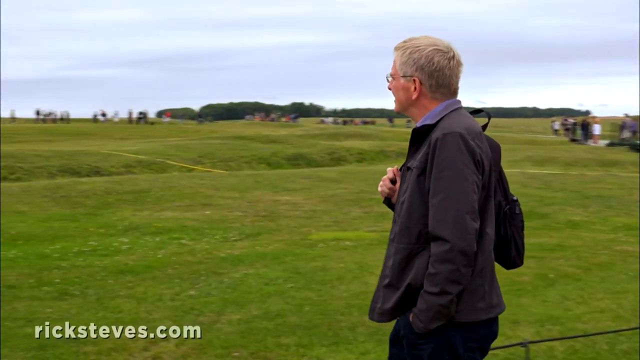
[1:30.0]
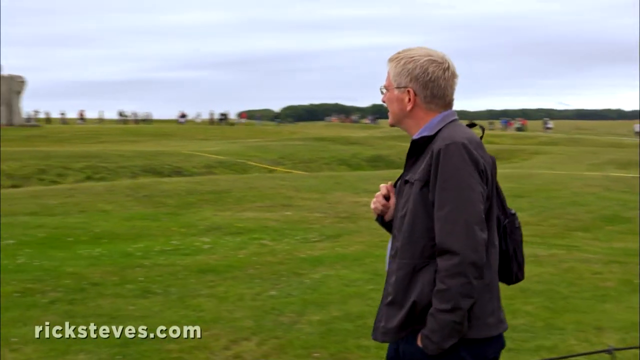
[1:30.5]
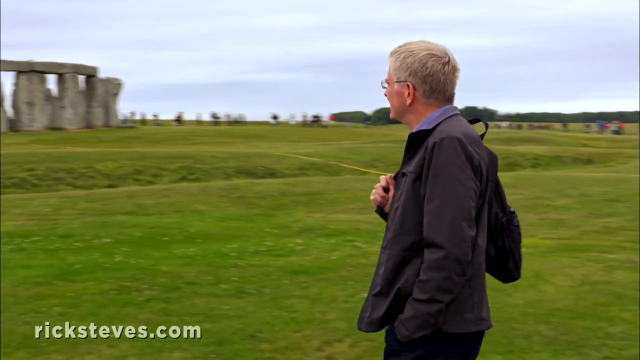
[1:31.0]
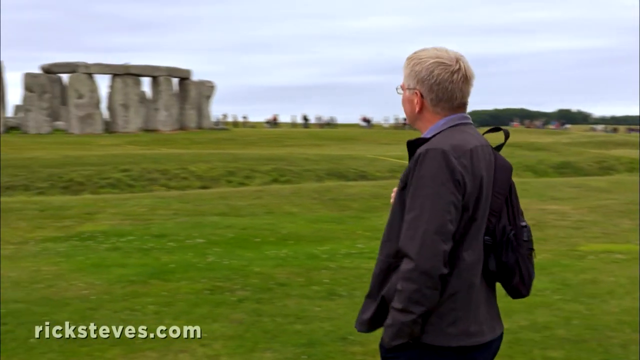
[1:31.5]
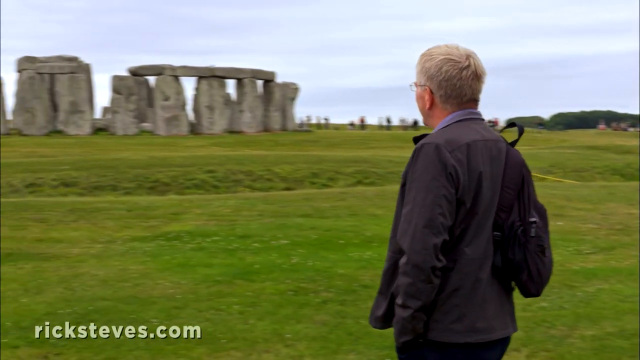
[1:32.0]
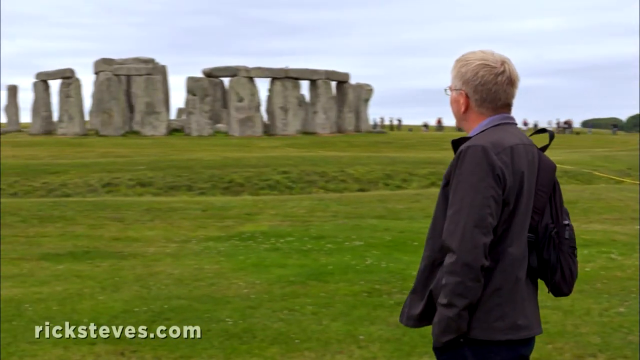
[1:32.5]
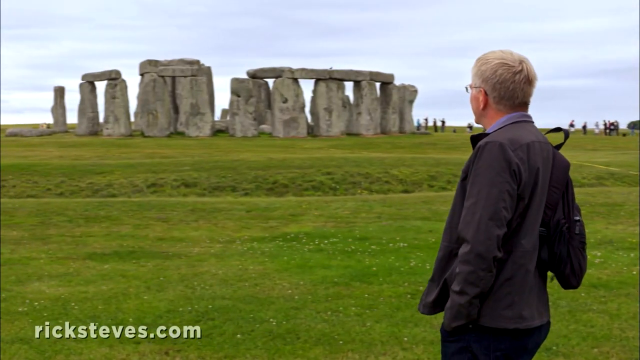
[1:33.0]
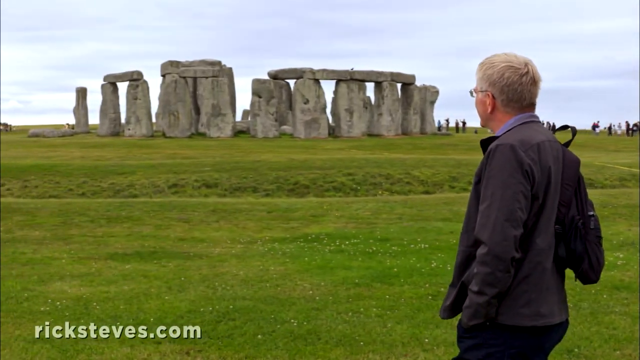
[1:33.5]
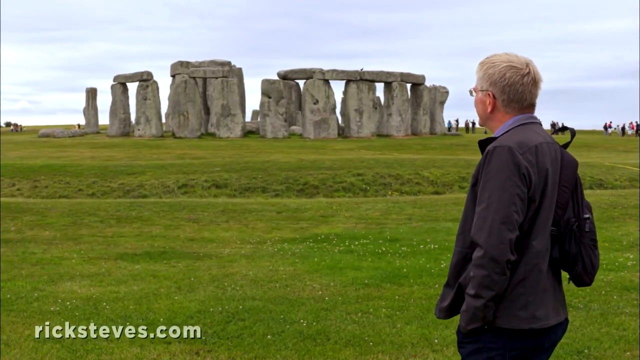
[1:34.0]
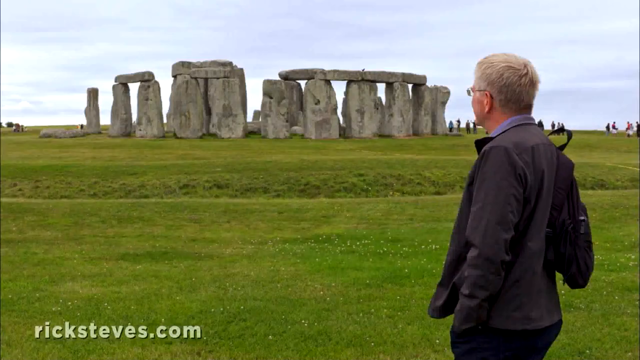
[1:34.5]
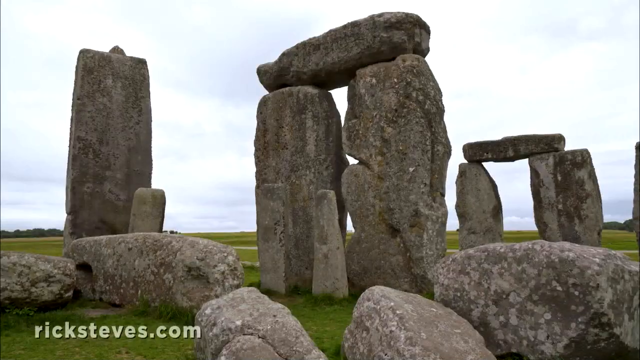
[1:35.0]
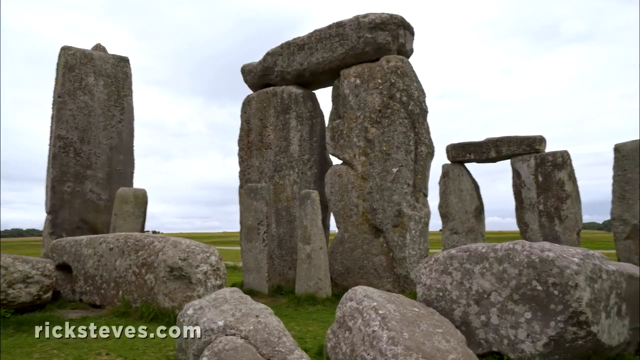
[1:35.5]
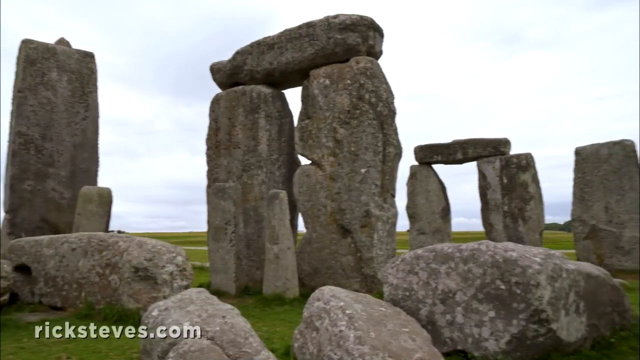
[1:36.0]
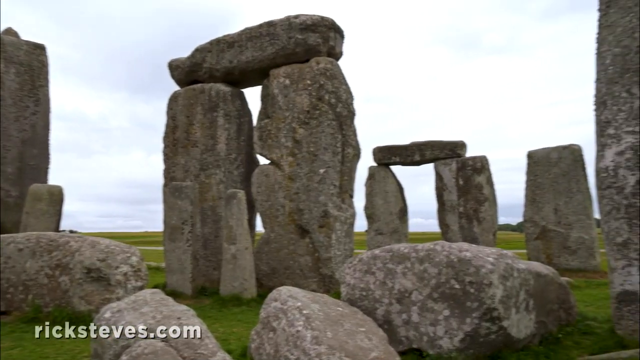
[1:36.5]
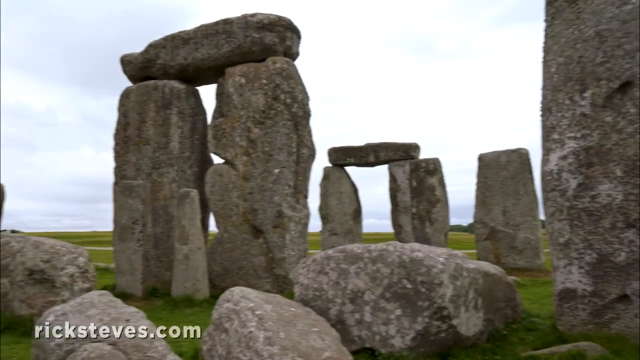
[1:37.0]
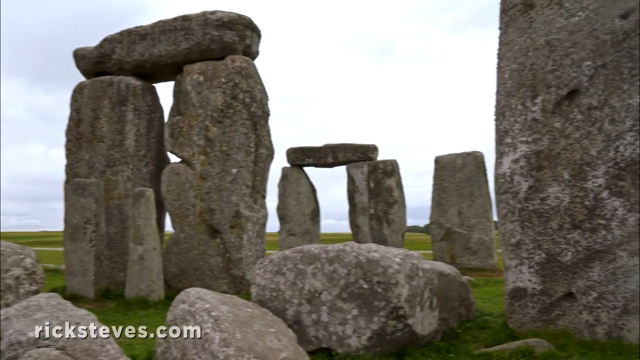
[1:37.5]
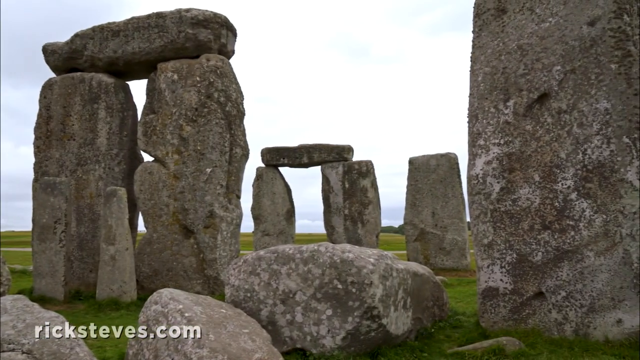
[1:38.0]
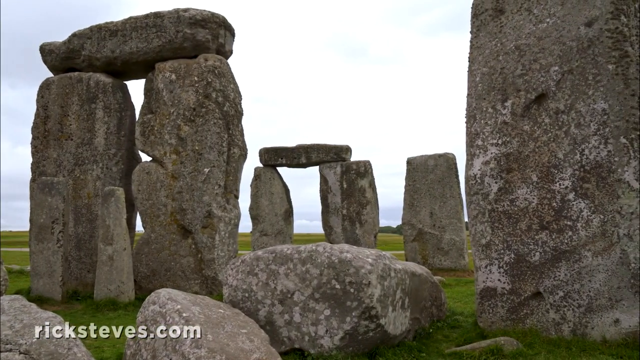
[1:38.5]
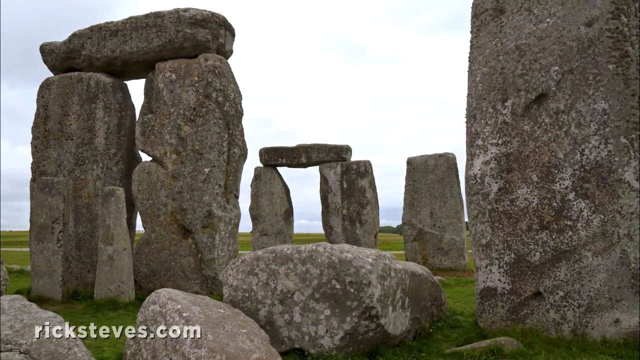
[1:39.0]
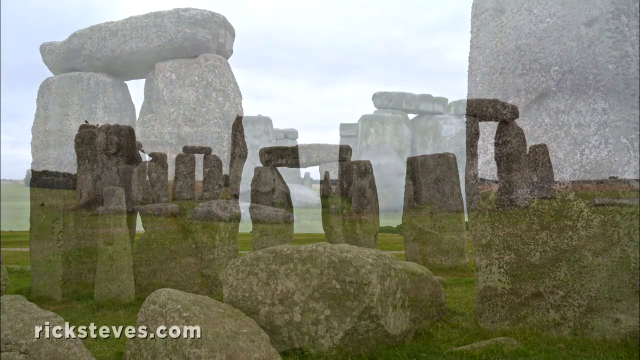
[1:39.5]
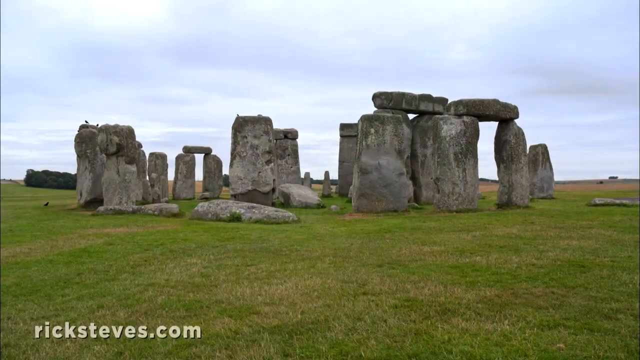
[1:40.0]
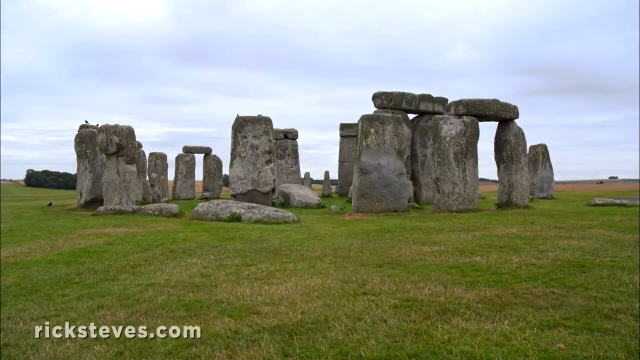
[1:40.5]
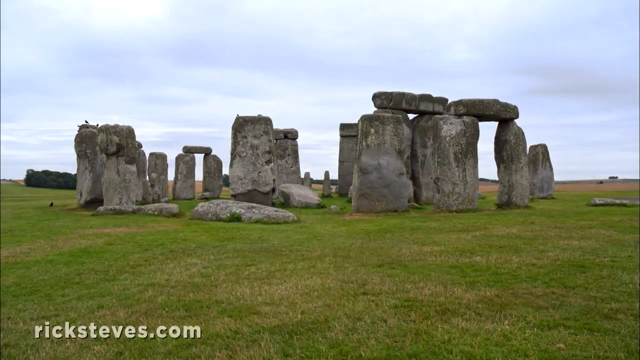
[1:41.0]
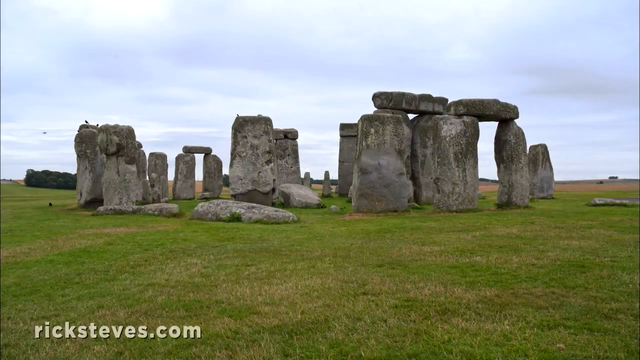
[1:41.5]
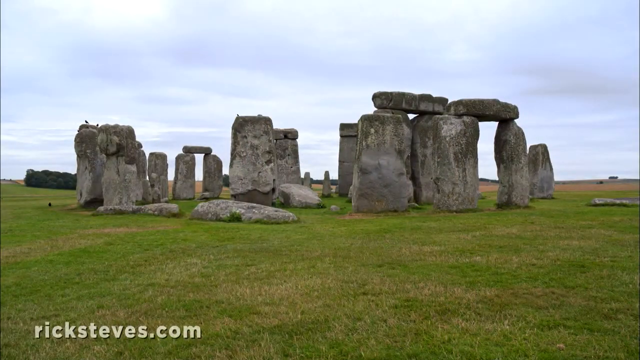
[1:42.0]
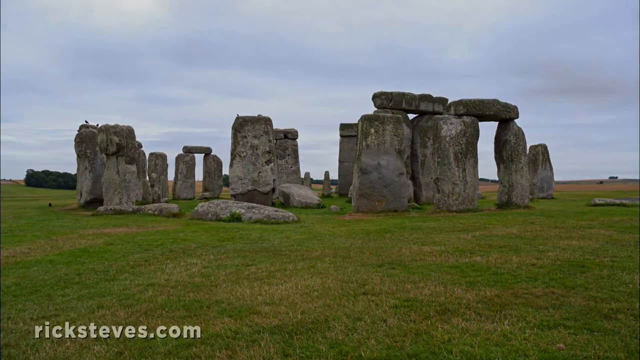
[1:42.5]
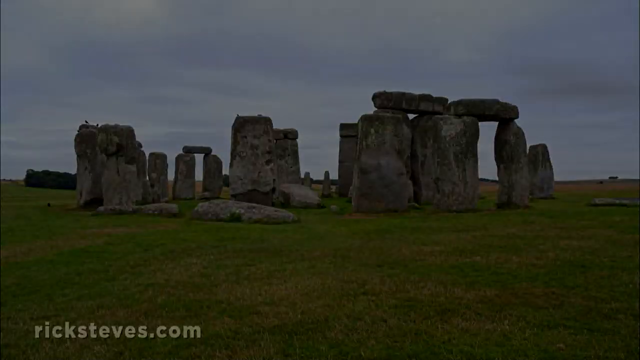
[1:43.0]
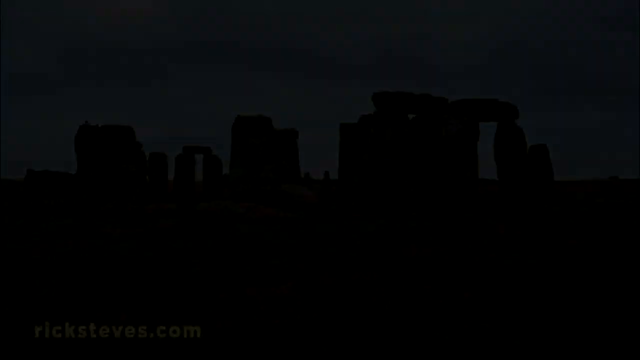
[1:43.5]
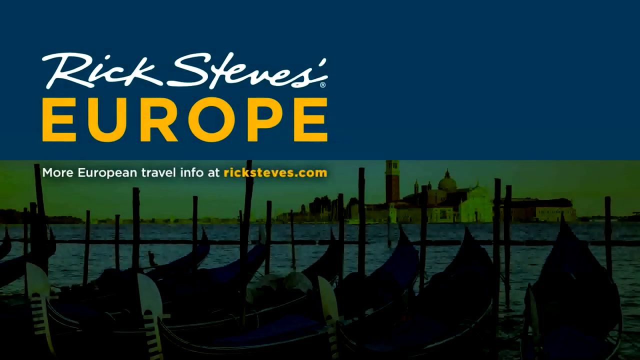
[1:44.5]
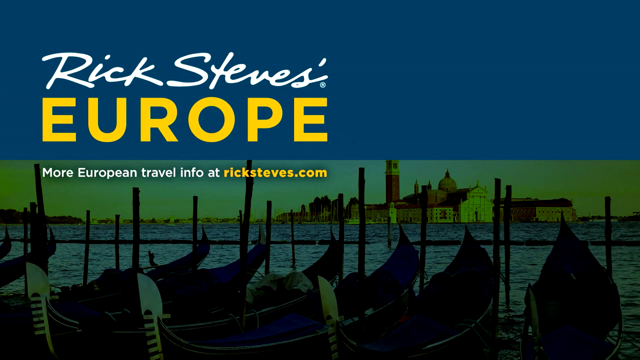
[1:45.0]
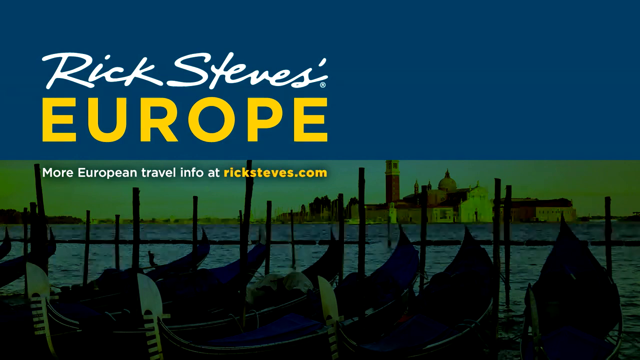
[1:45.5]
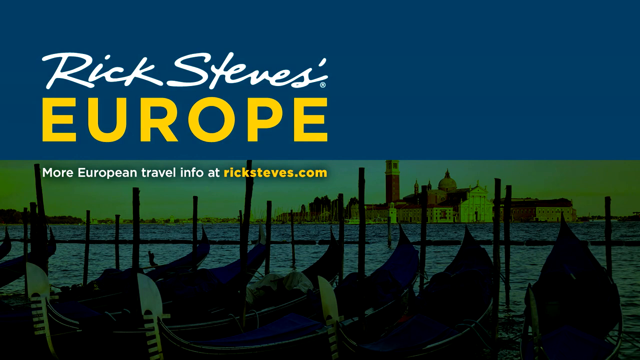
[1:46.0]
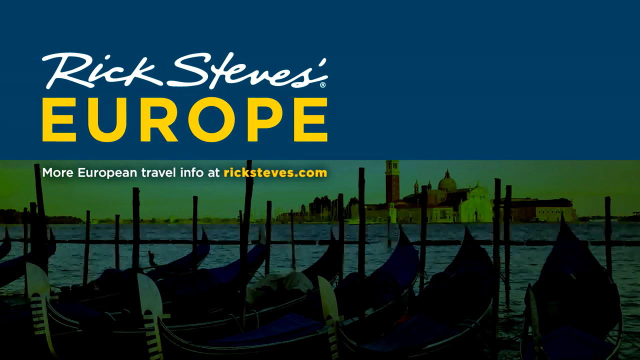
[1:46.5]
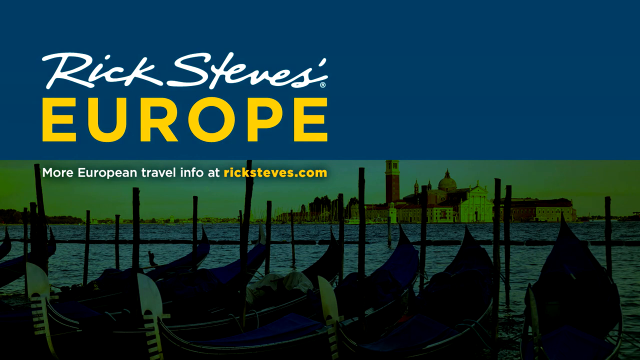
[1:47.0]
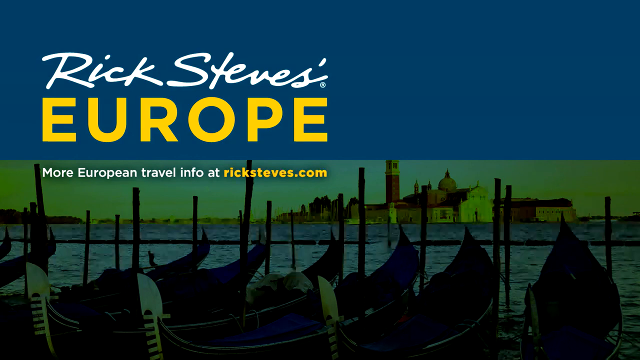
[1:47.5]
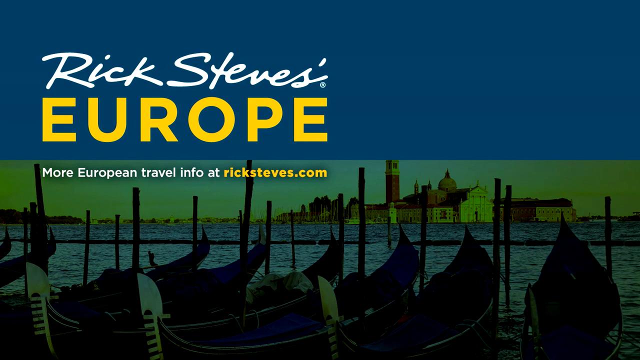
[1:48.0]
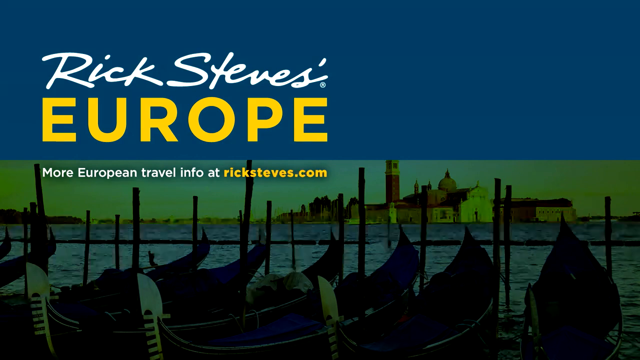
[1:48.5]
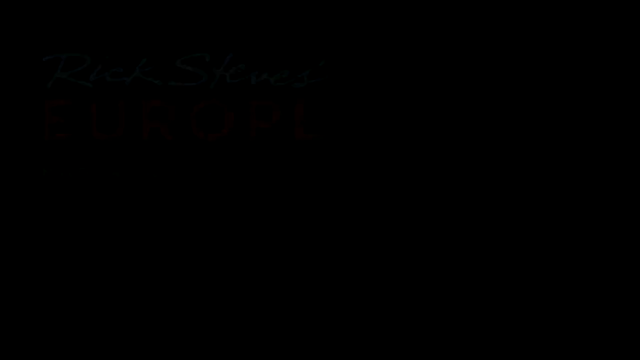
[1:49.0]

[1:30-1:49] A man walks along, looking at Stonehenge and gazing off into the area. A screen then appears that looks to say "Rick Steves Europe"; the man holding the shoulder bag and gazing at Stonehenge is apparently Rick Steves. The screen shows two links to other videos touring different areas of Europe: one is the Hill of Tara and St. Patrick, and the other looks to be a tour of England. In the bottom left corner of the screen, it says "ricksteves.com".